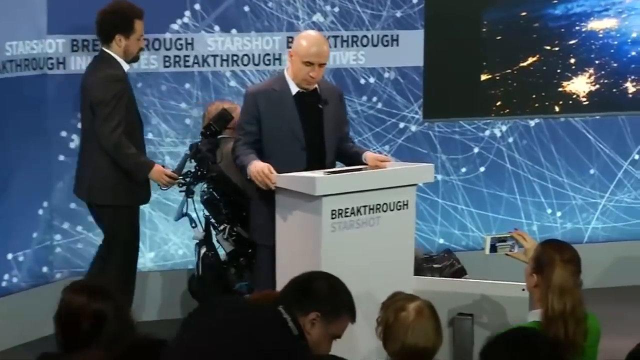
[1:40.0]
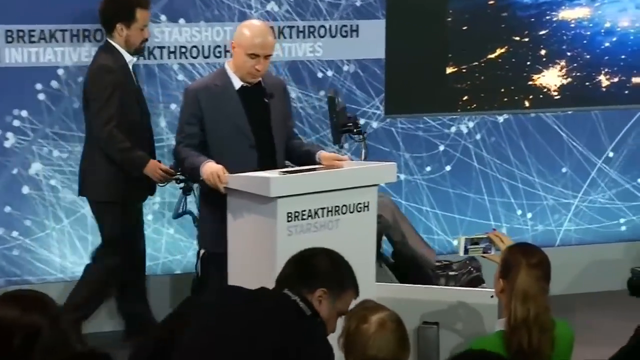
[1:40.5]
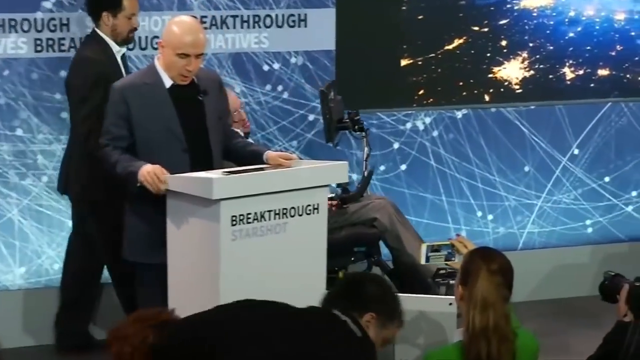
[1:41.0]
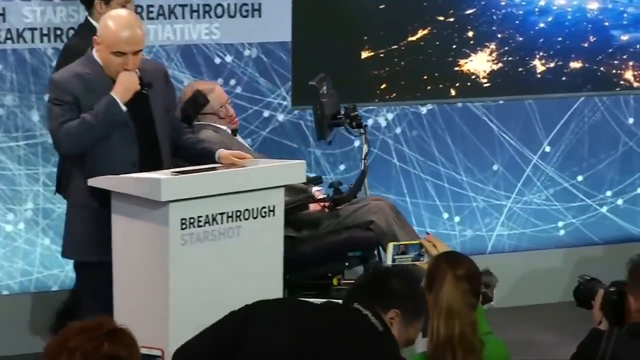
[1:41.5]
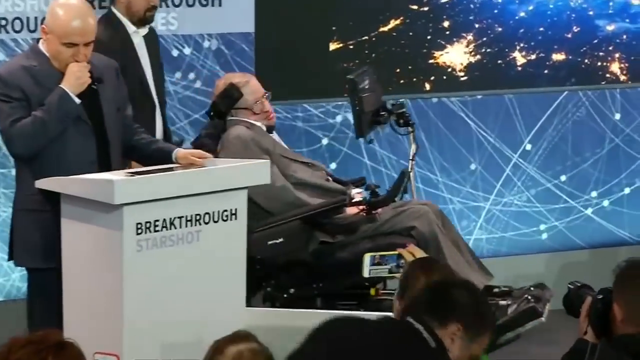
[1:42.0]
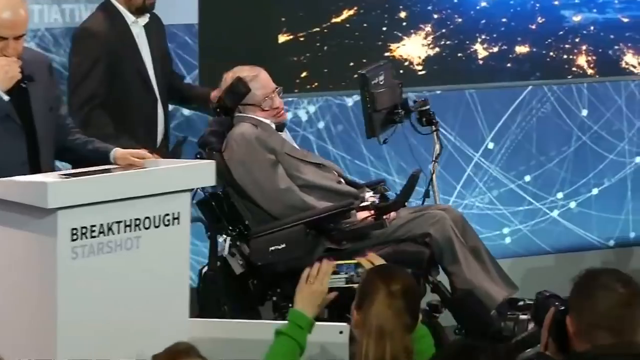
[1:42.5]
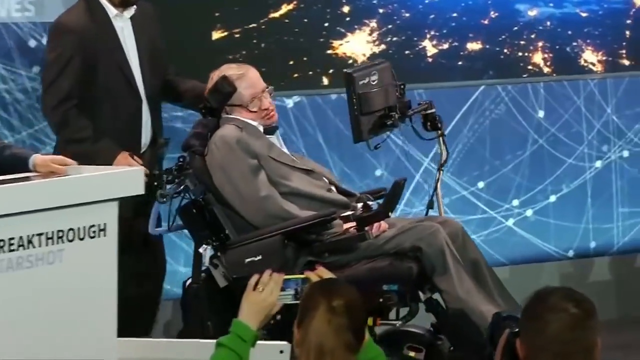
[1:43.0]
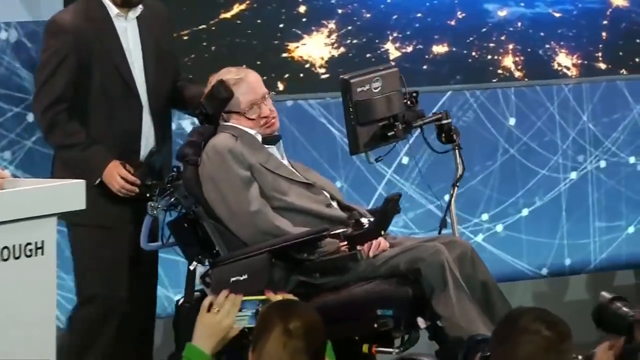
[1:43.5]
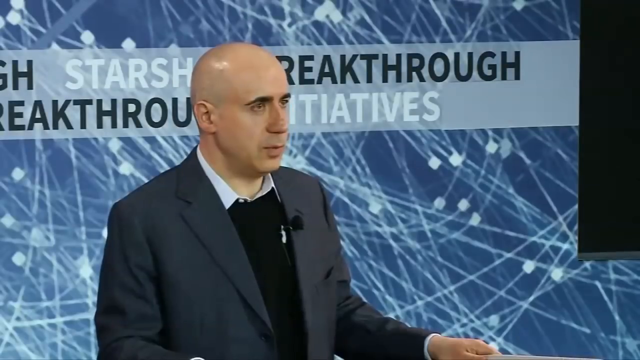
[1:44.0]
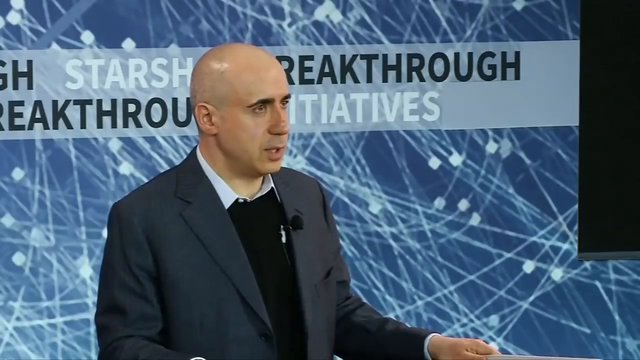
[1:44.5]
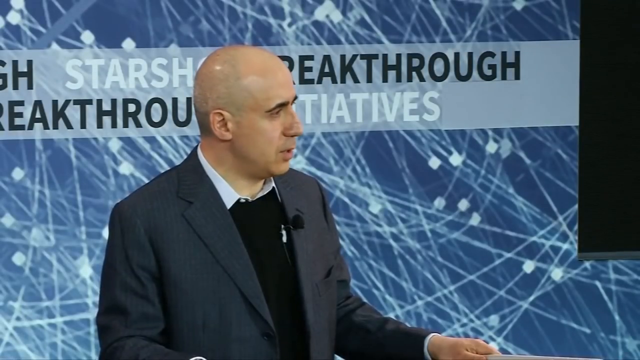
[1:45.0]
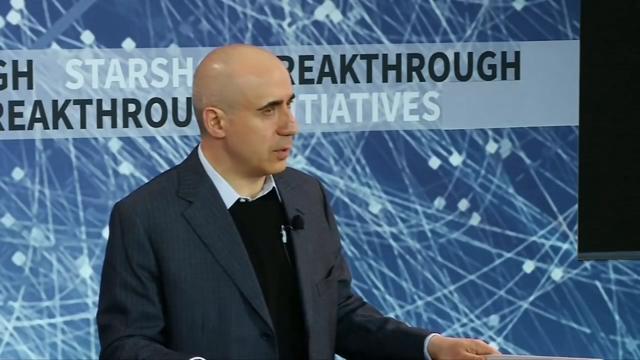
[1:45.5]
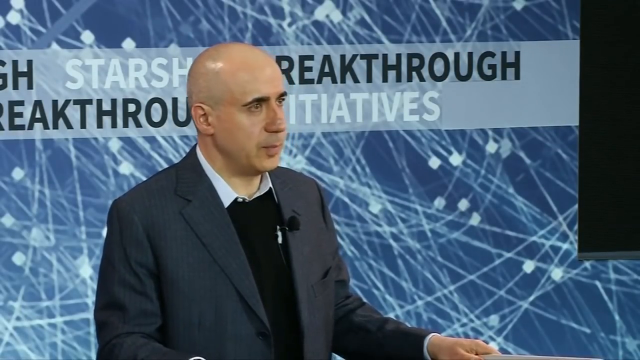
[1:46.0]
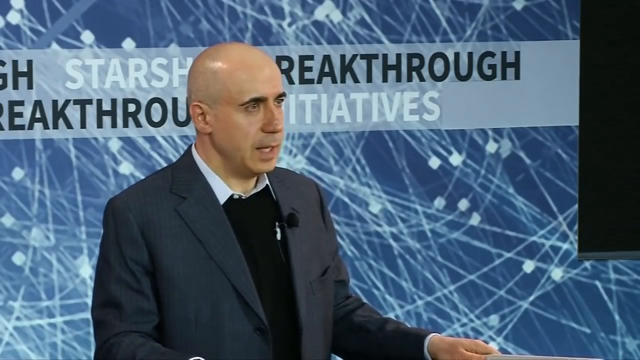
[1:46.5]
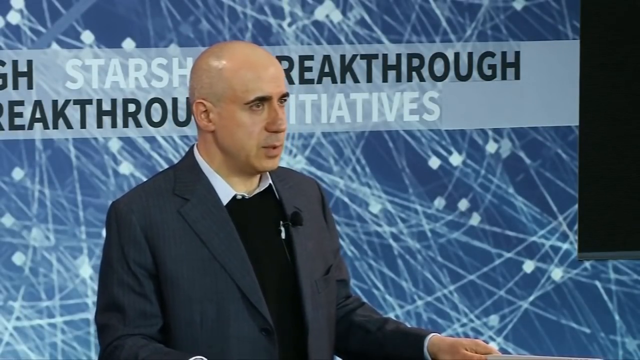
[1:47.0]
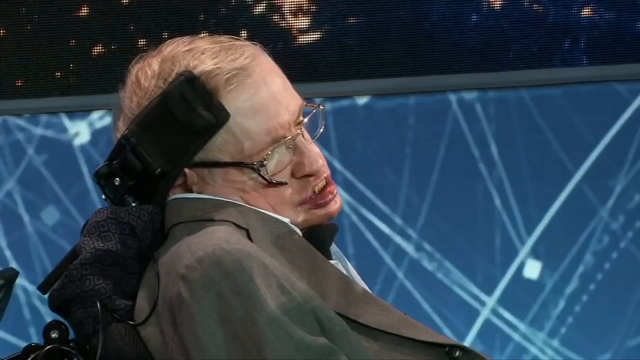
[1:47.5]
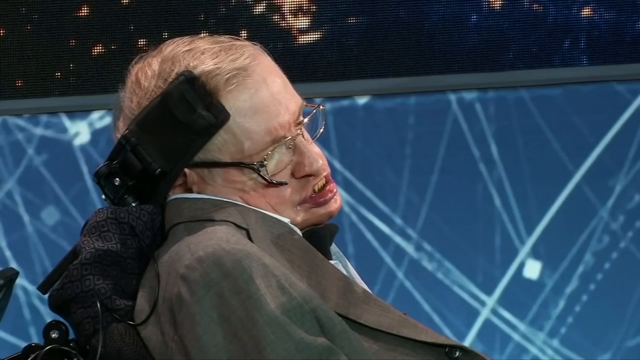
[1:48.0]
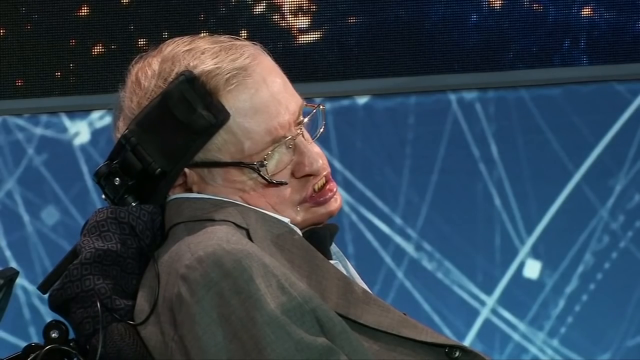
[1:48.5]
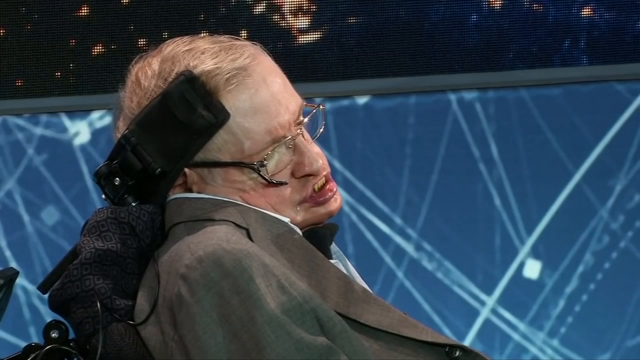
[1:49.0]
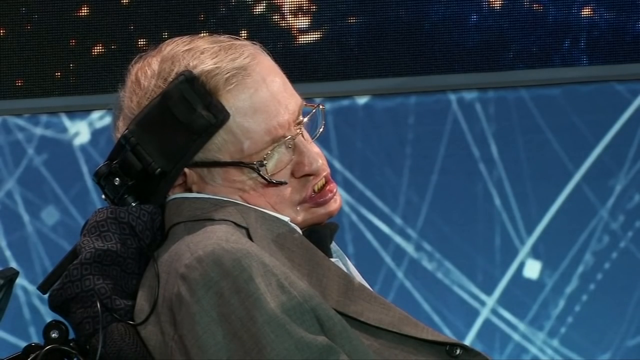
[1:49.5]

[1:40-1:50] A man in a suit wheels Stephen Hawking onto the stage while audience members watch; one is seen holding a mobile phone and recording a video of the events. The speaker stands at a podium, wearing a grey suit, a black jumper and a white shirt, with a small microphone on the lapel of his suit. The video then shows a close-up of Hawking's face. The stage background shows space, with the words "Breakthrough Starshot" appearing in several places.